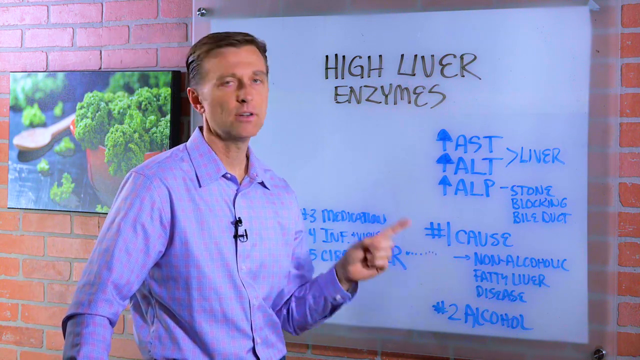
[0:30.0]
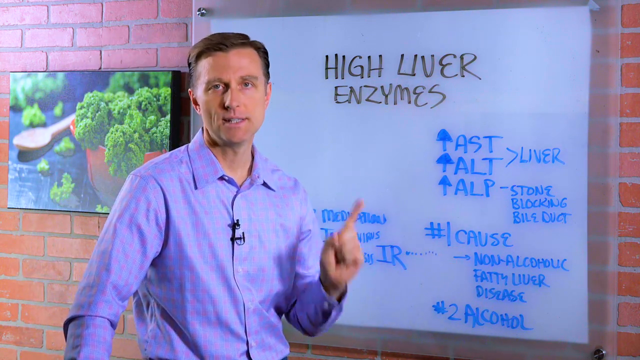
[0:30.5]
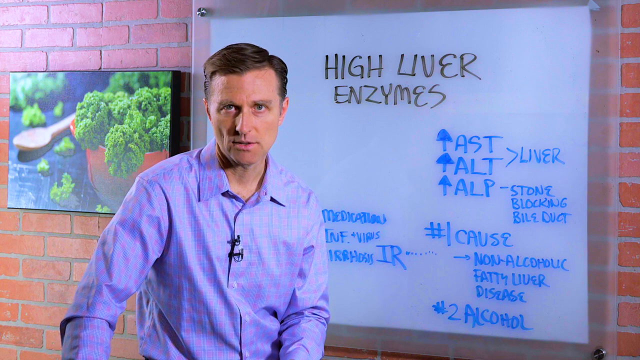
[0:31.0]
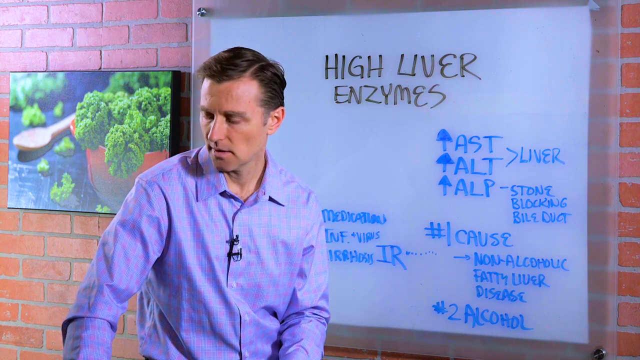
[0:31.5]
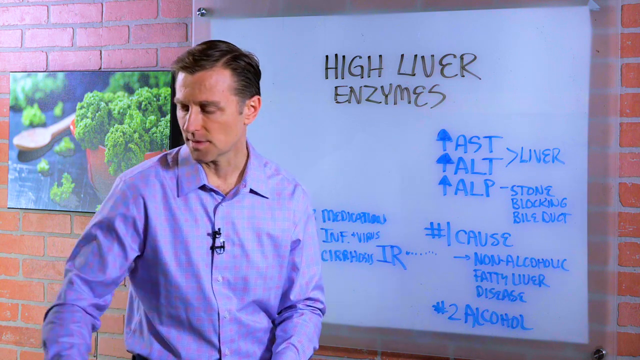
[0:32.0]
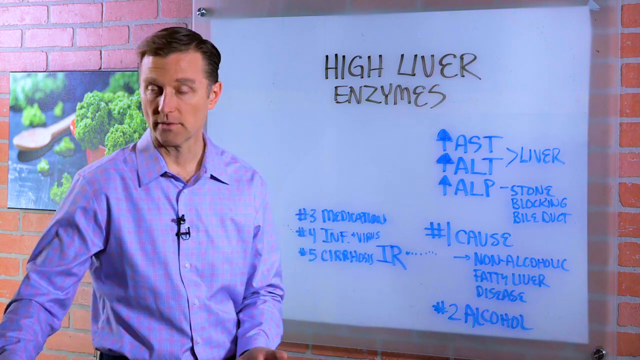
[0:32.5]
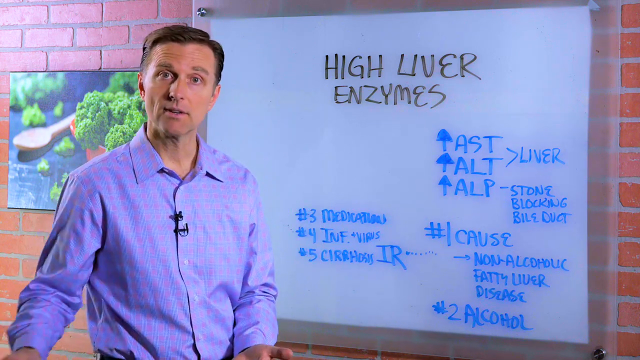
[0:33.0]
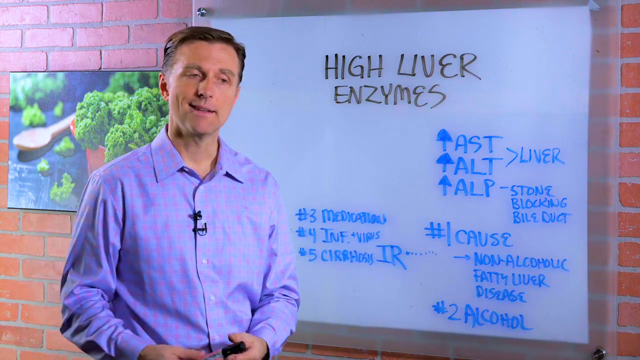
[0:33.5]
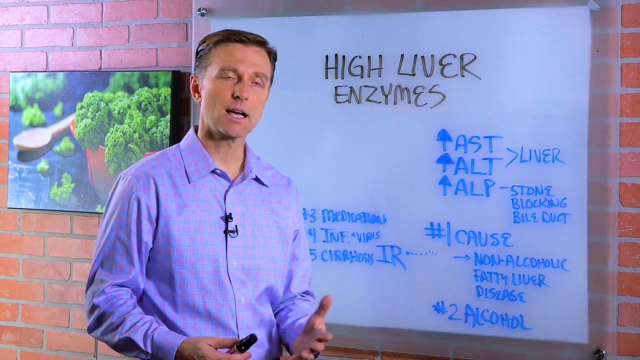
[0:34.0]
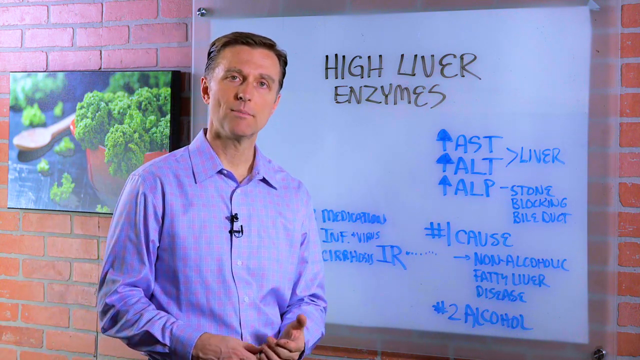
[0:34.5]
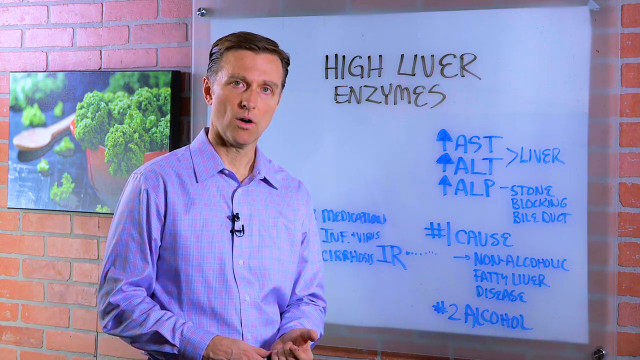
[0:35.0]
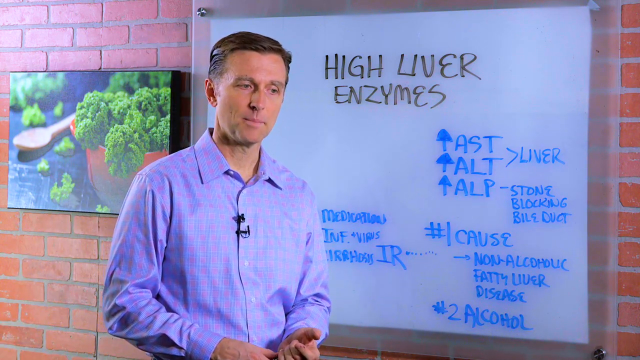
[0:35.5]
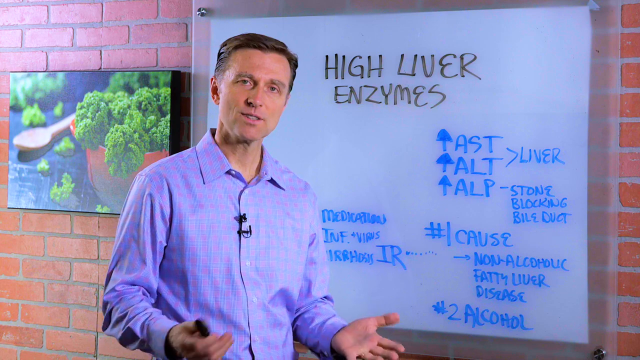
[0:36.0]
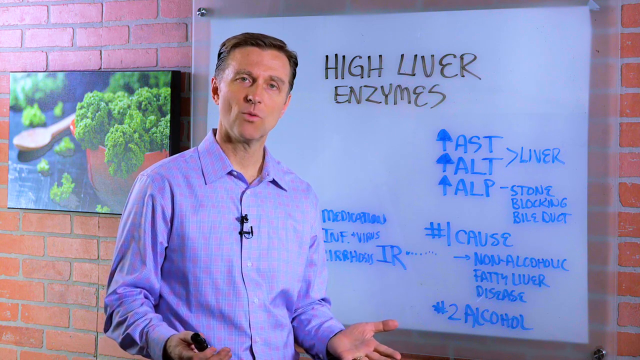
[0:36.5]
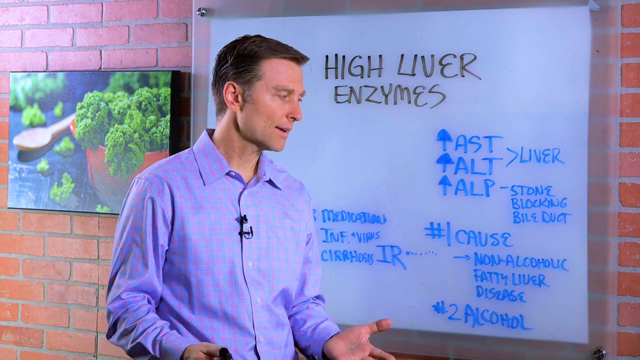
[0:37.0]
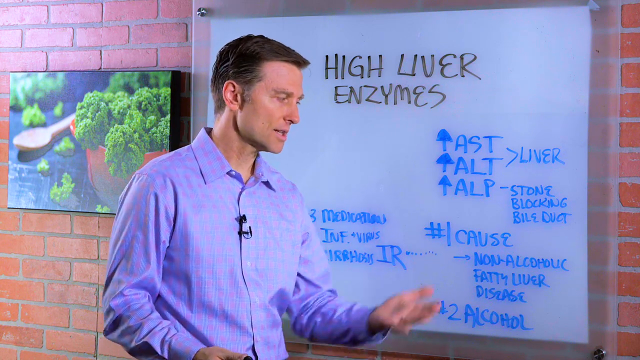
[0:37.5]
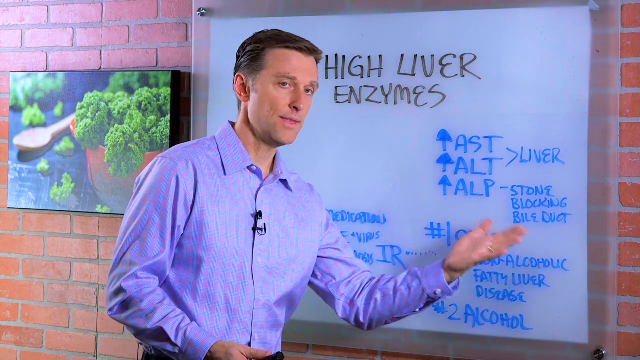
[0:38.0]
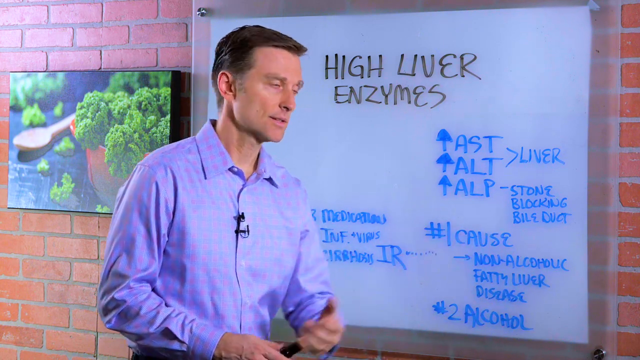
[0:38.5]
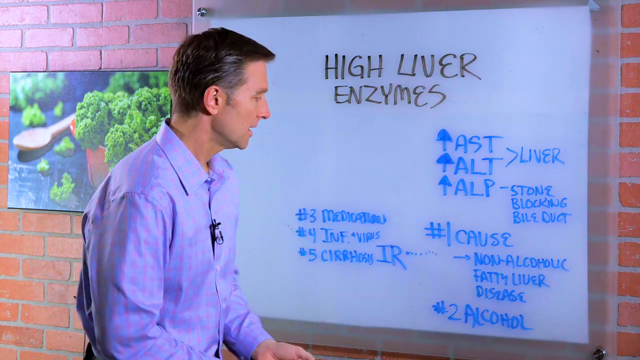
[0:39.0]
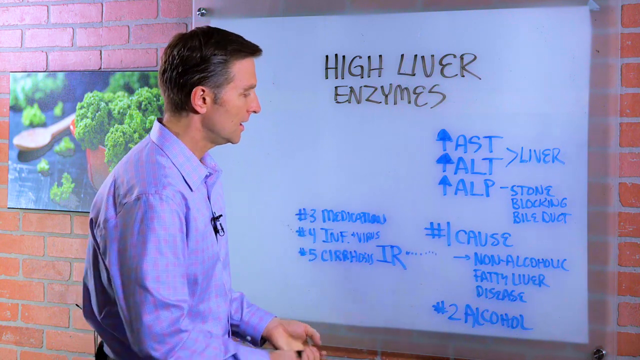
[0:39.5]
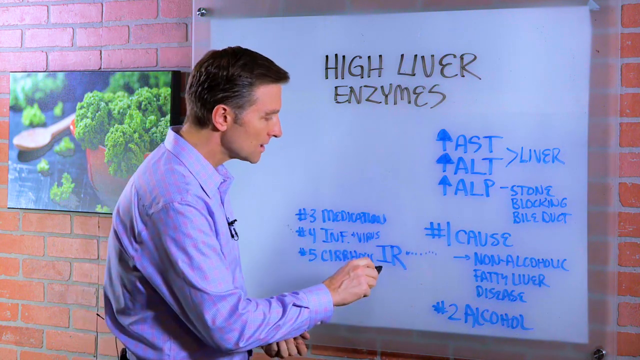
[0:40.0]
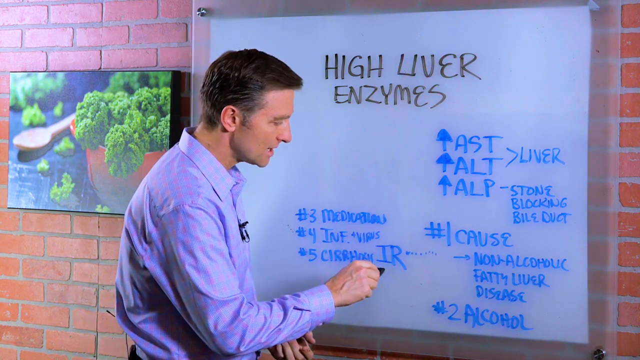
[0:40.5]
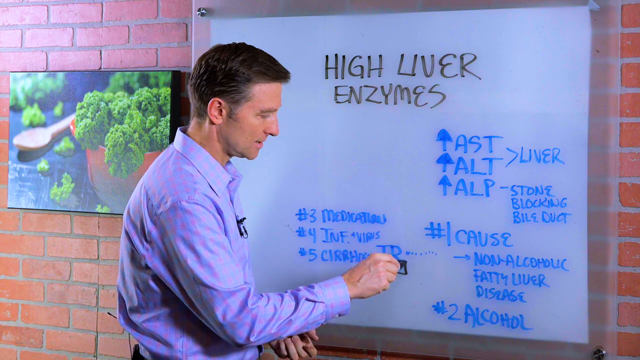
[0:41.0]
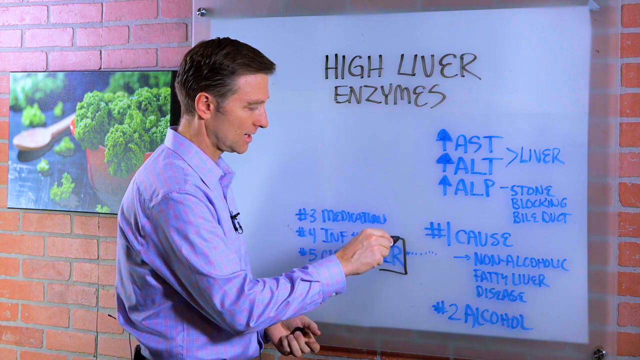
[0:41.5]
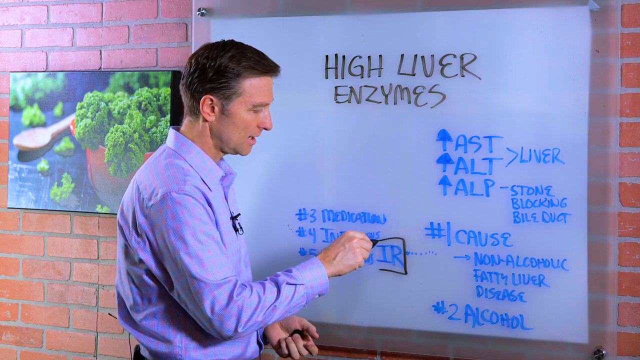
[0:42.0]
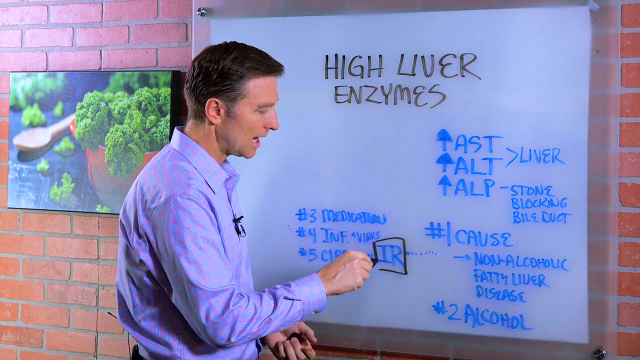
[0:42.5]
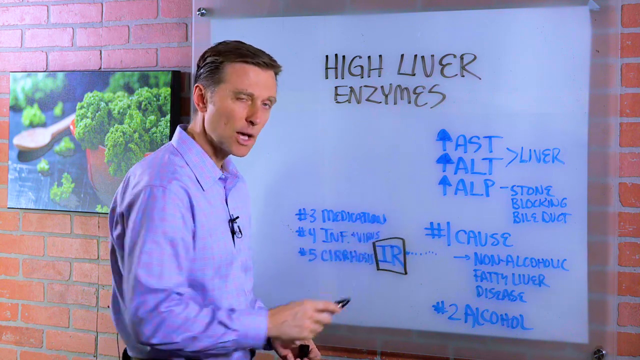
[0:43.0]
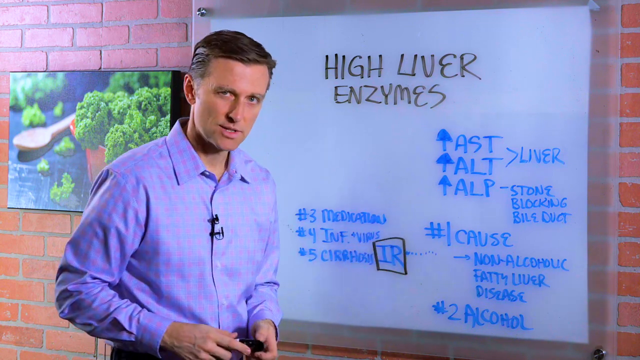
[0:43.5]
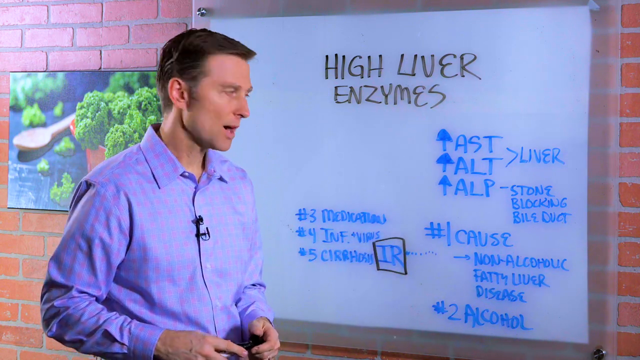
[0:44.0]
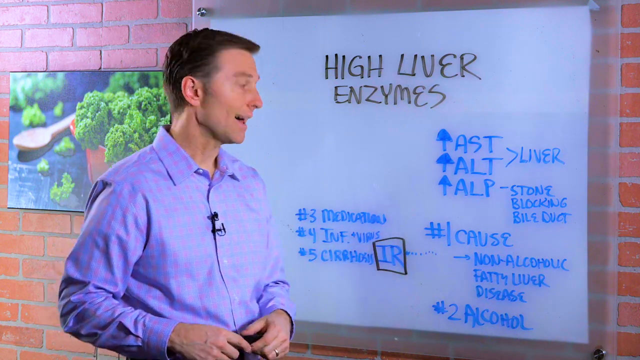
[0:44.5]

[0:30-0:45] The man reaches off-camera and takes a marker in his right hand. The marker appears to be black. He writes on the whiteboard and circles "IR." He speaks to the camera, gestures with his hands and at the board, then uses the black marker to make a square around "IR." He points his finger, reaches off-camera again, speaks to the camera, points to the whiteboard, and marks "IR" again with the black pen. The board reads "number one," "number three, medications," "number four, INF" and "number four, cirrhosis." A dotted line runs from "IR" toward "non-alcoholic," which has an arrow. Filled-in arrows pointing up are next to "AST," "ALT" and "ALP," and next to "ALP" it says "stone, blockage, bile duct." The man opens his hands, points at the board with his left hand, and draws a square around "IR."